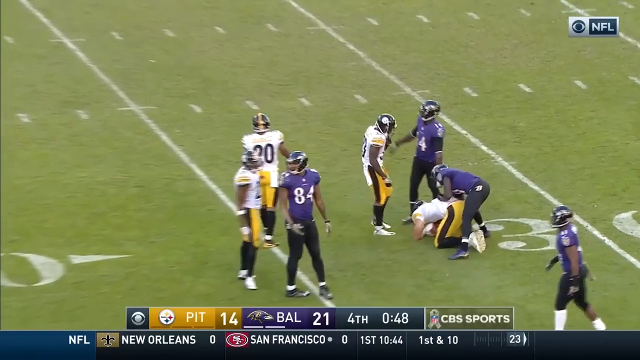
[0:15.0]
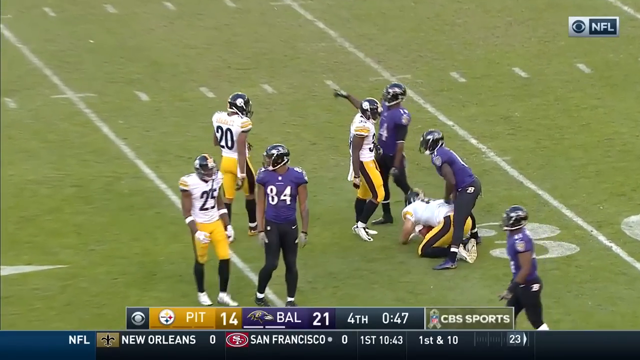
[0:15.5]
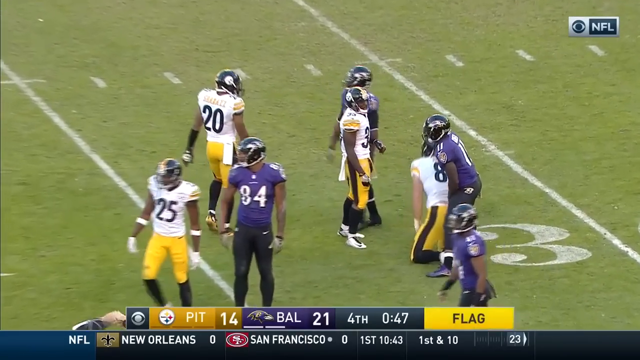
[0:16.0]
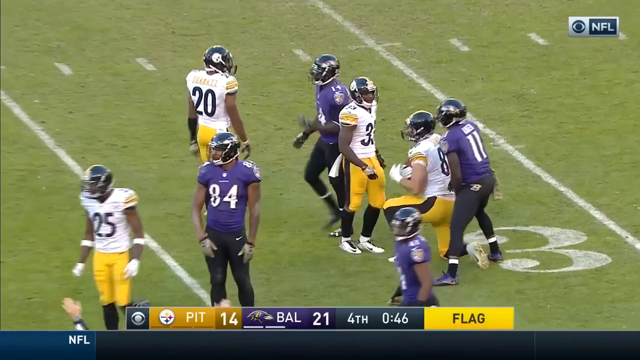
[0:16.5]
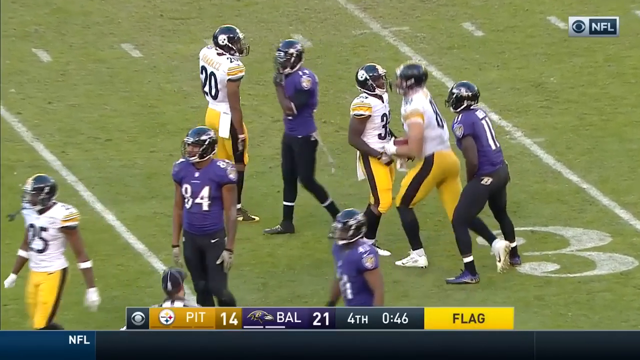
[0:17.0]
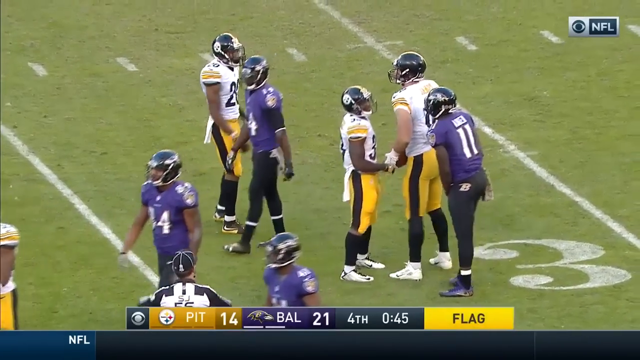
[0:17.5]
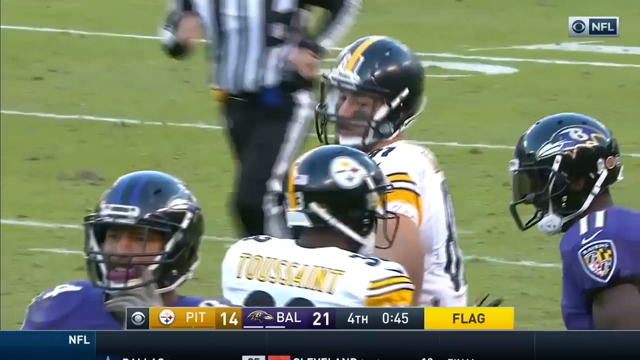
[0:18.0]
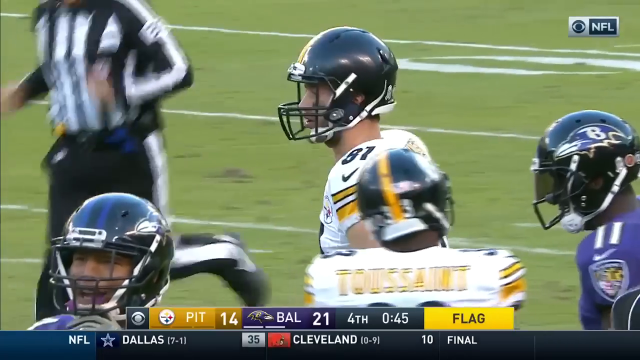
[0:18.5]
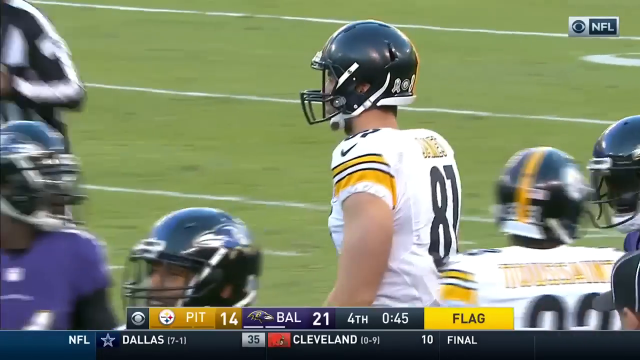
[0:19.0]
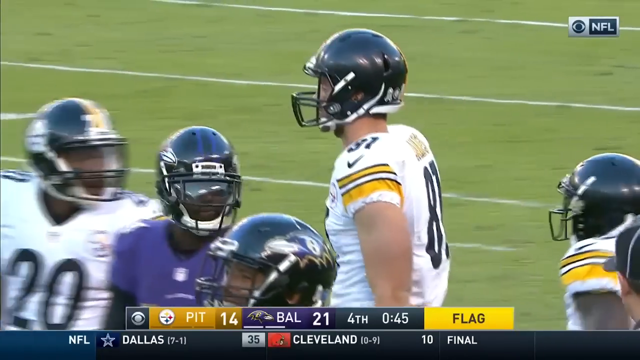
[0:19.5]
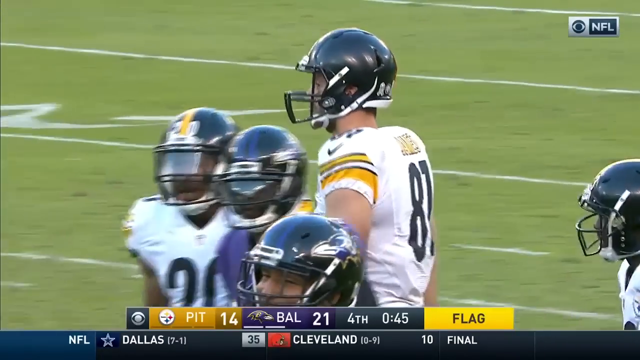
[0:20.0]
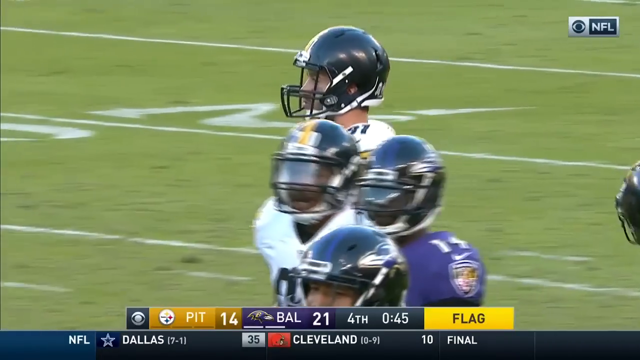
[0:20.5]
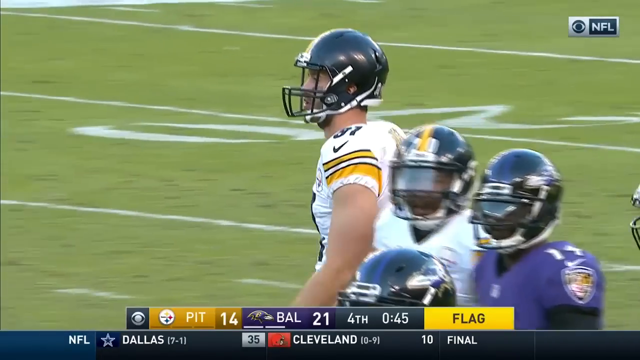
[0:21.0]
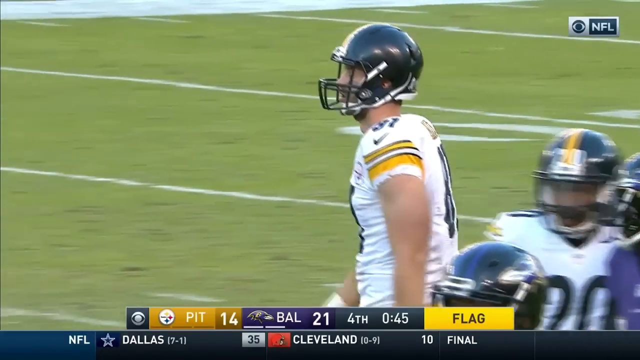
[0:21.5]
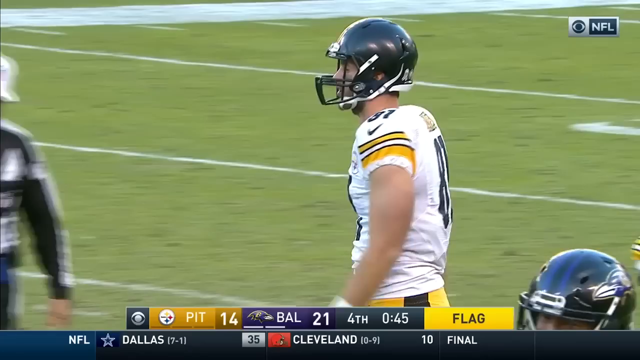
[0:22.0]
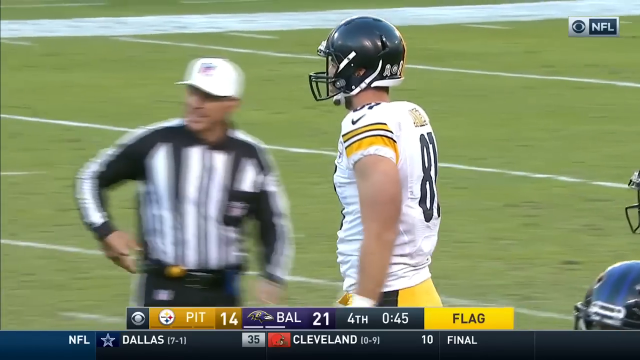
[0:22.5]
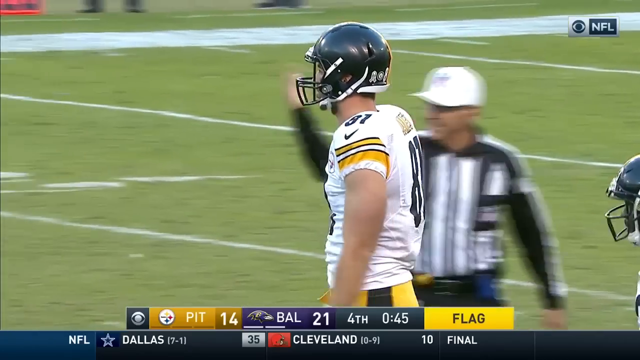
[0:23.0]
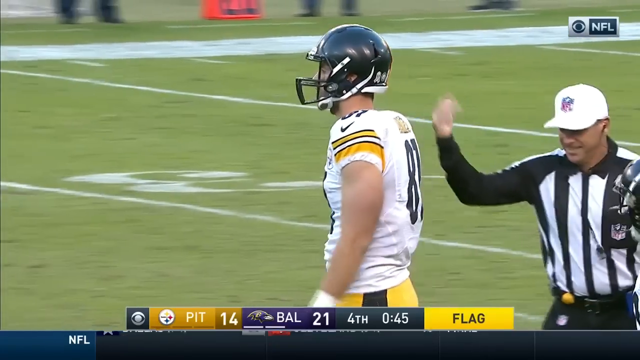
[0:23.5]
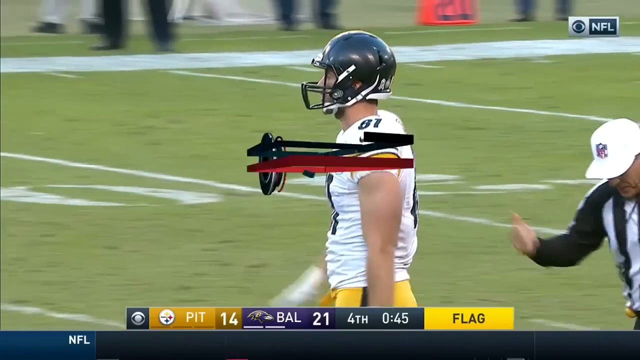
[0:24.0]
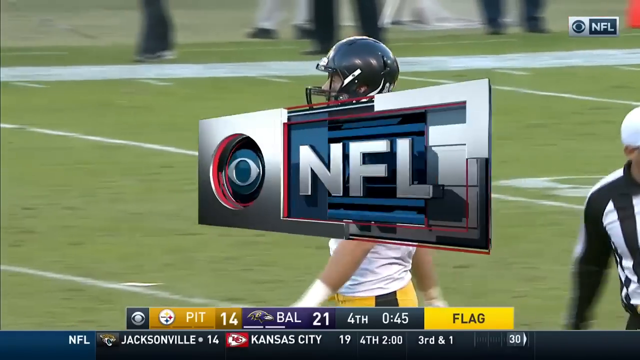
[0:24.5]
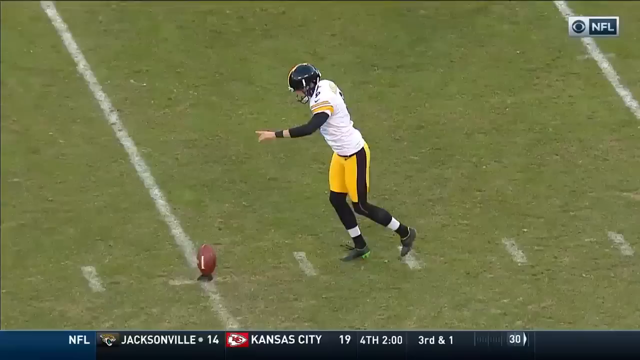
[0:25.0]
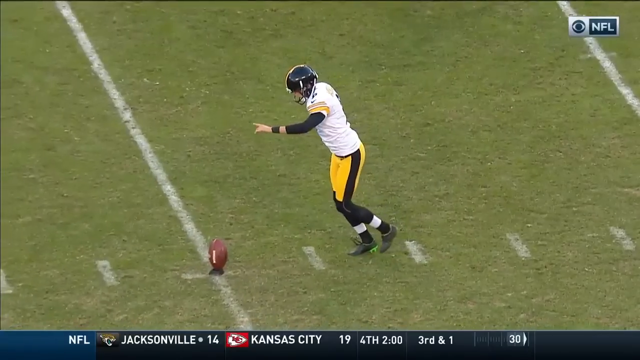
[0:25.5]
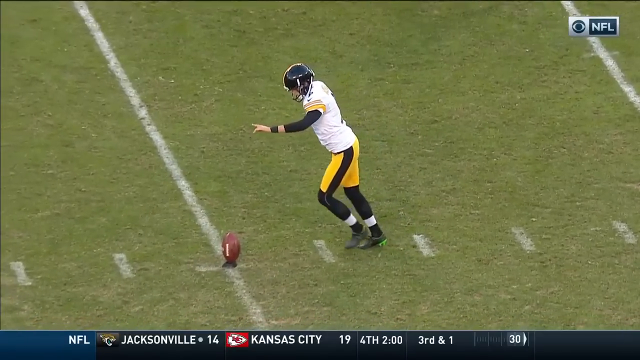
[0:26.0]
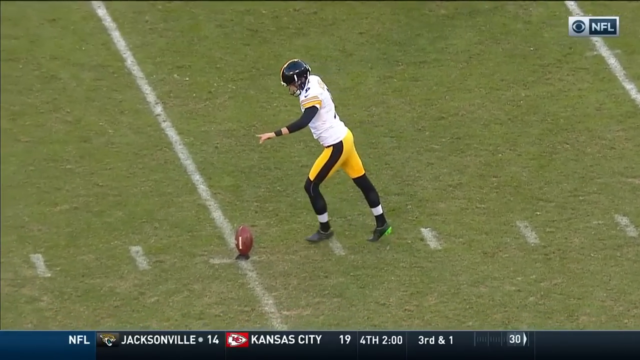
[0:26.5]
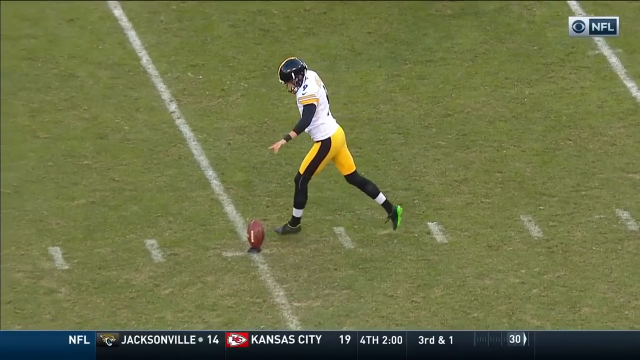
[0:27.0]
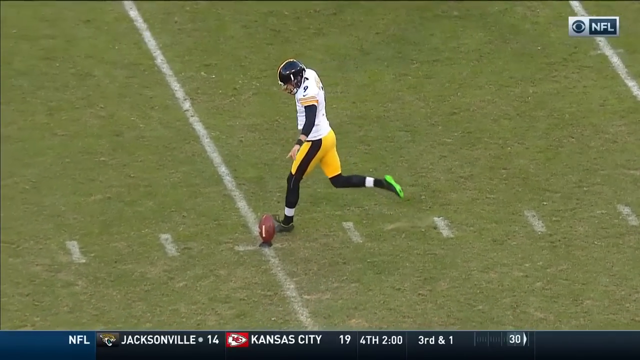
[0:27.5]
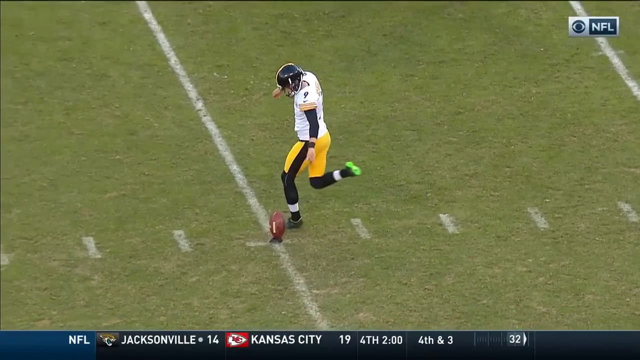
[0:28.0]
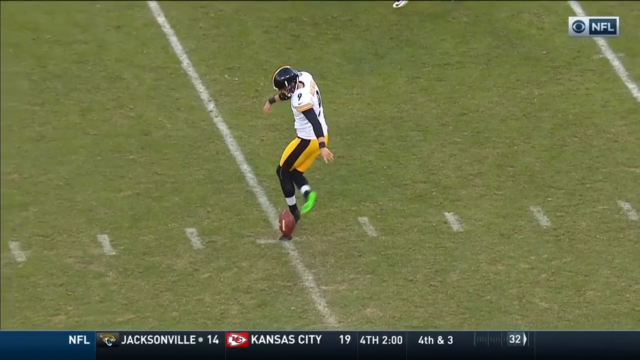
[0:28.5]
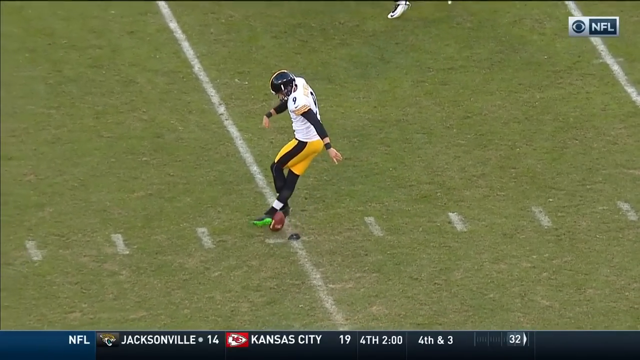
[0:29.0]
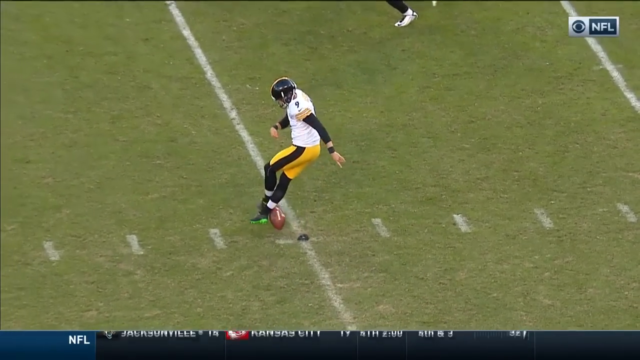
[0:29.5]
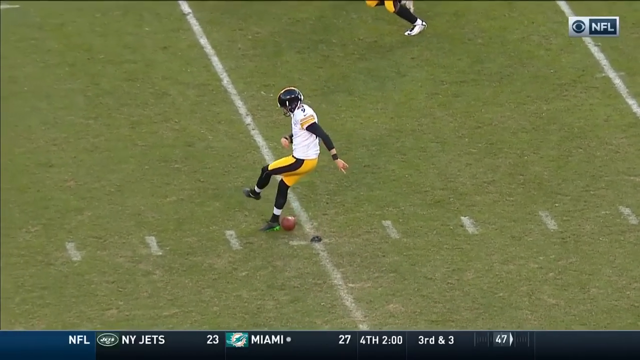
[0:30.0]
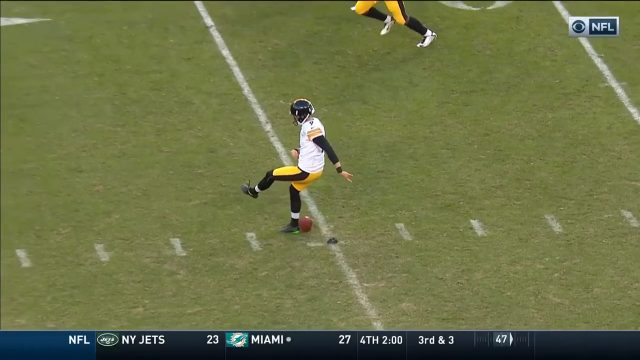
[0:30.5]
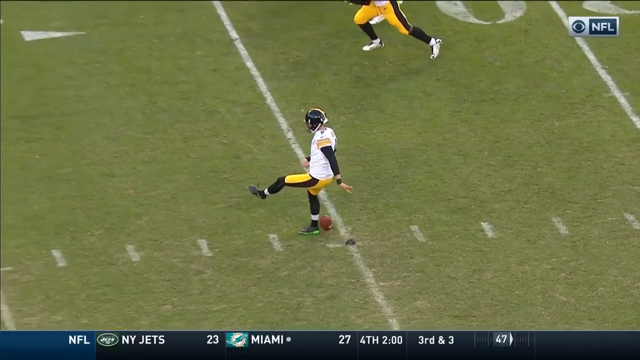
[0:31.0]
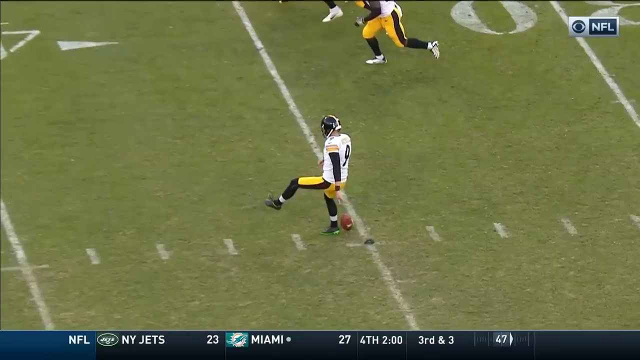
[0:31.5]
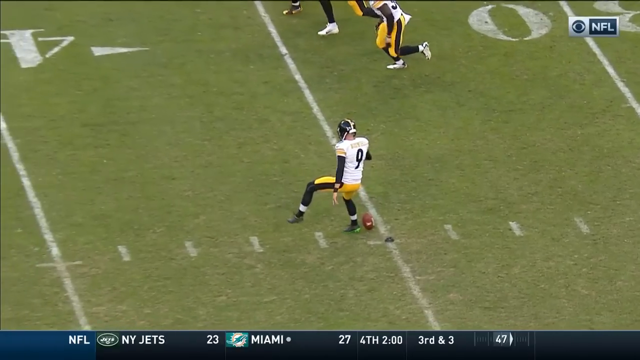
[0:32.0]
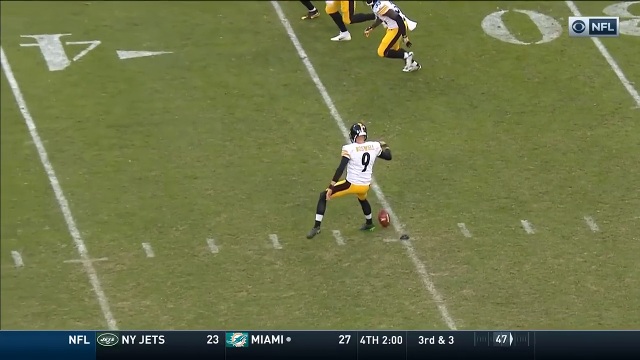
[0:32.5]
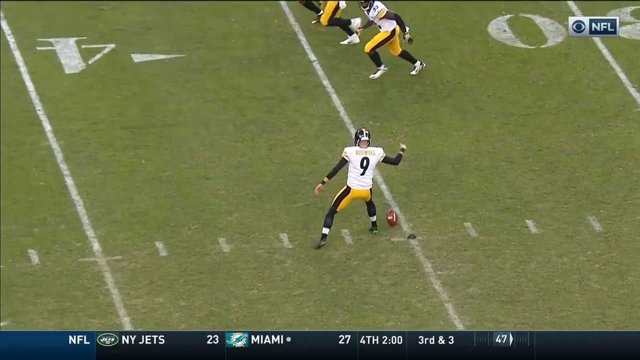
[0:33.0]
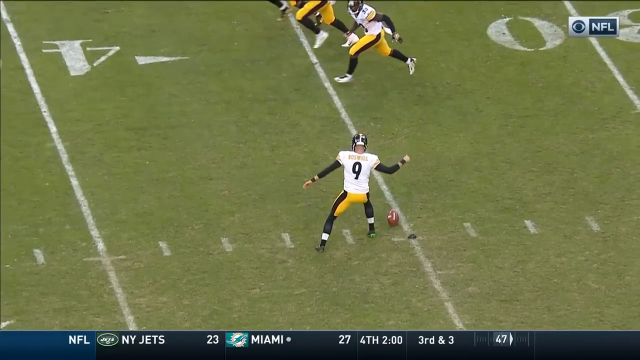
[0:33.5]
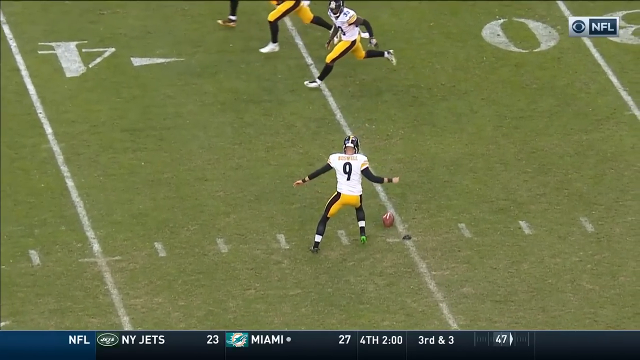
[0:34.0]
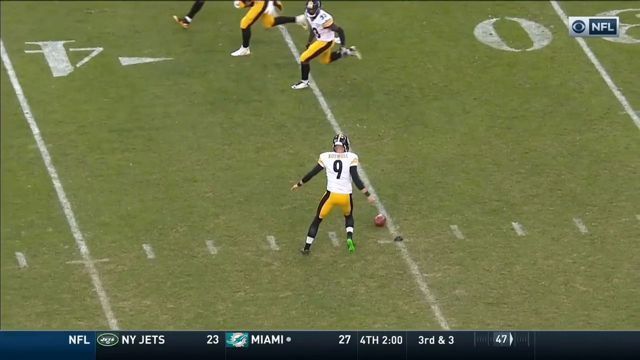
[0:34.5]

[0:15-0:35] At the end of the play, the players walk off the field. The number 81 is shown for a little bit. The play is then replayed in slow motion: the kicker runs up to the ball, apparently trying to wave his foot around it. His foot goes around the ball and just catches the top of it, making it fall.